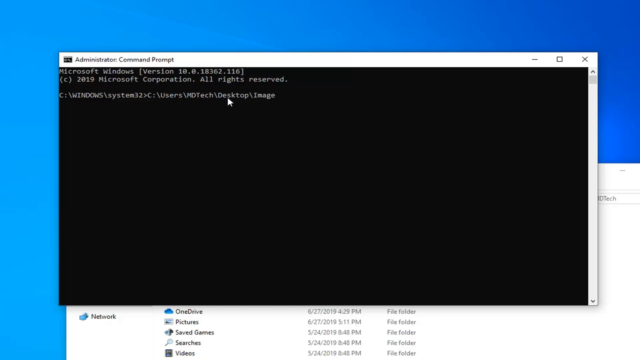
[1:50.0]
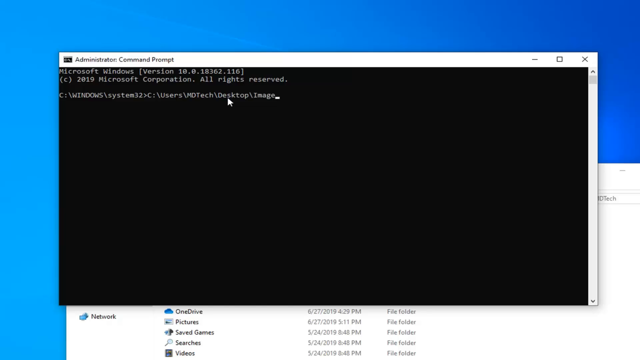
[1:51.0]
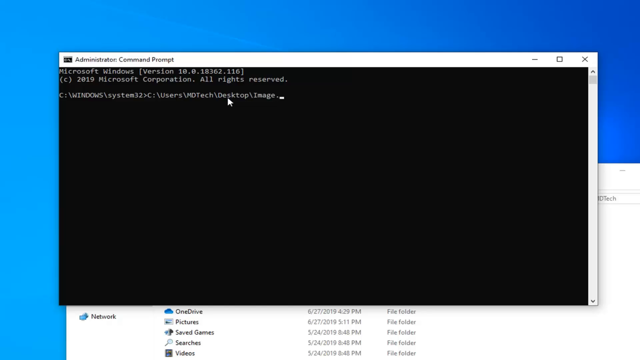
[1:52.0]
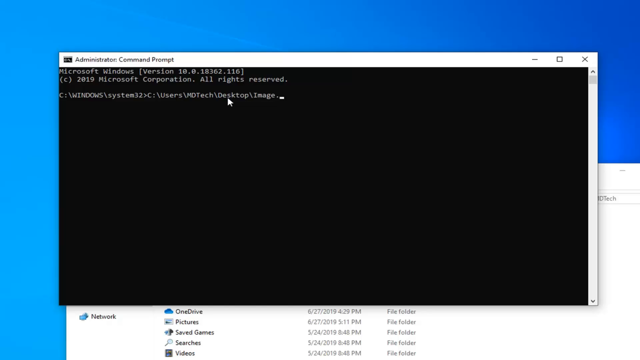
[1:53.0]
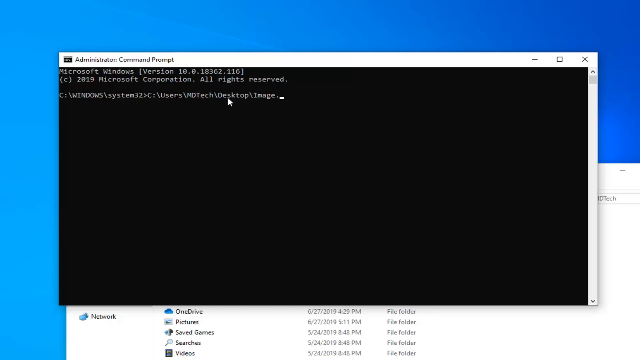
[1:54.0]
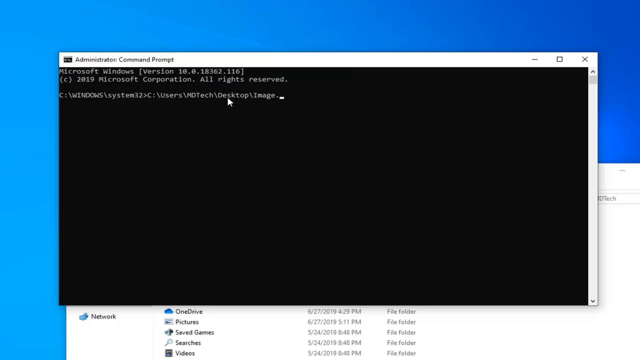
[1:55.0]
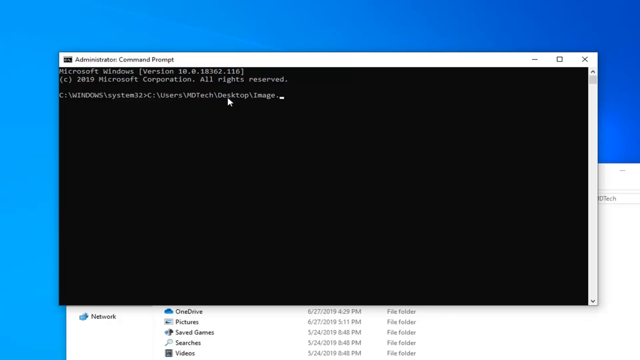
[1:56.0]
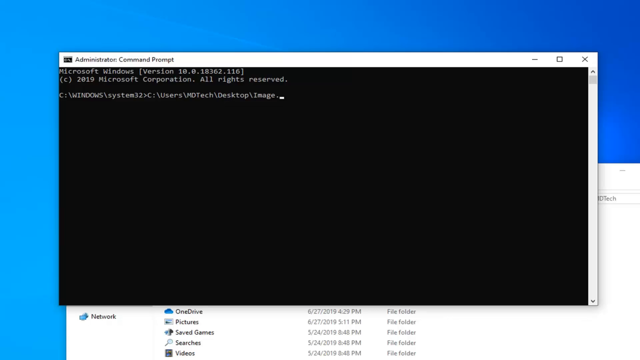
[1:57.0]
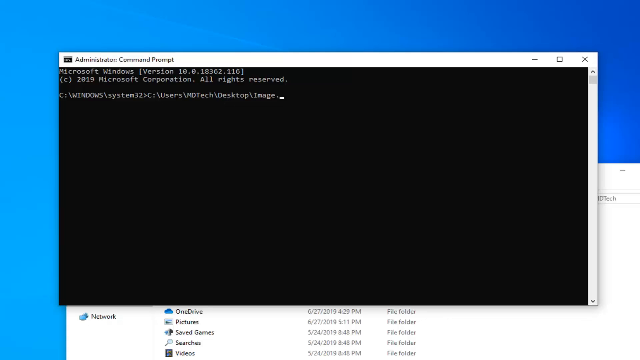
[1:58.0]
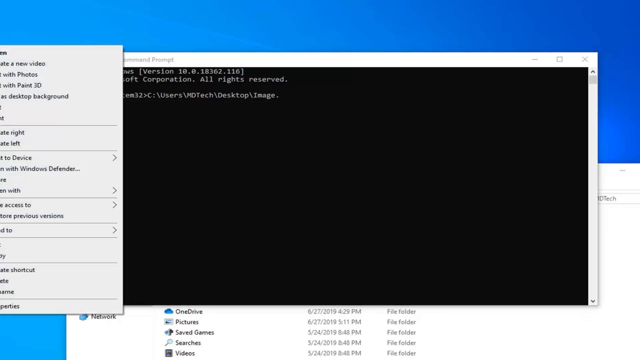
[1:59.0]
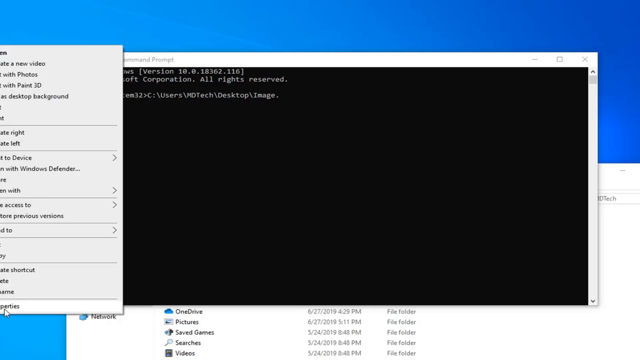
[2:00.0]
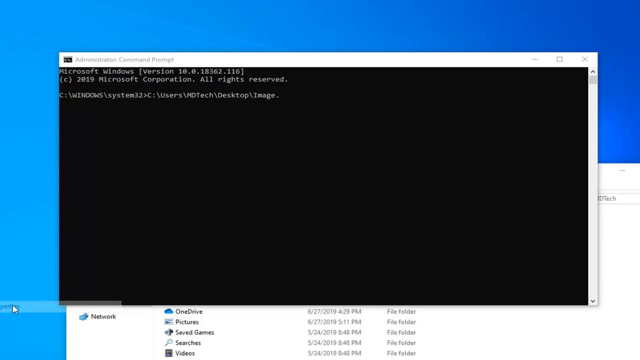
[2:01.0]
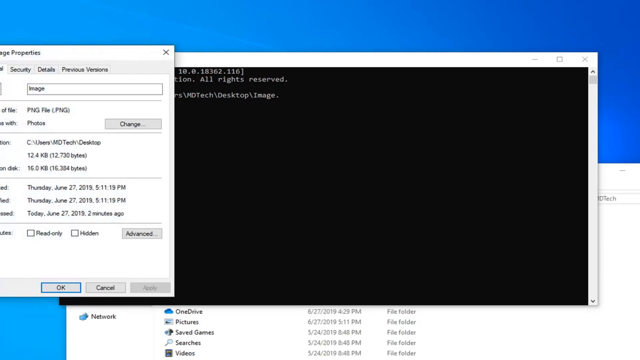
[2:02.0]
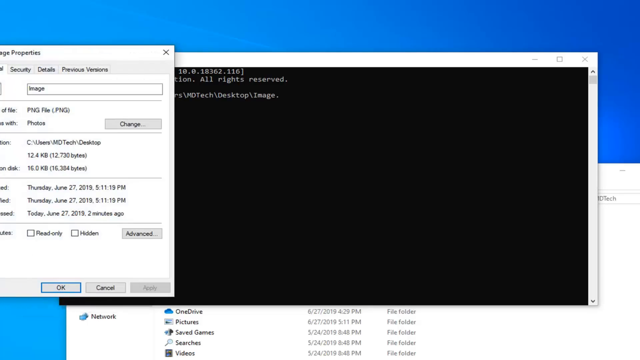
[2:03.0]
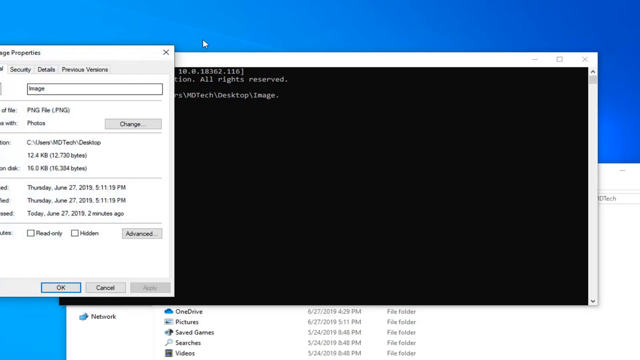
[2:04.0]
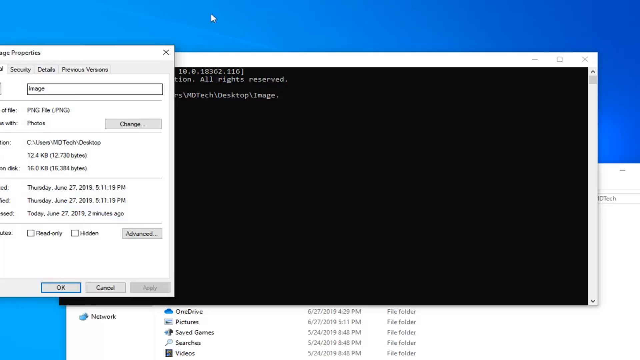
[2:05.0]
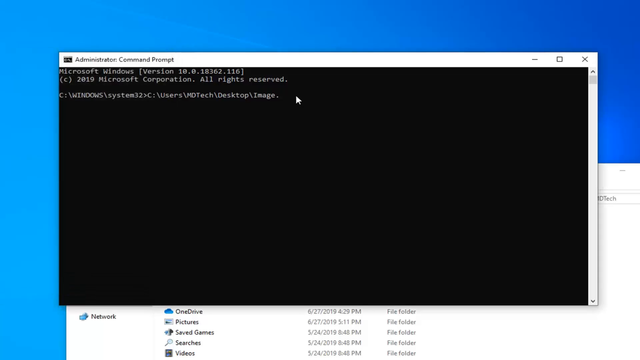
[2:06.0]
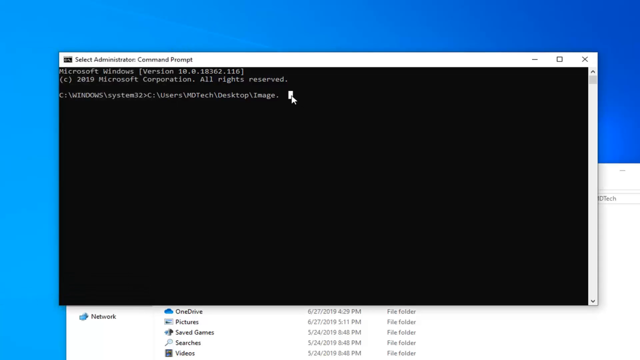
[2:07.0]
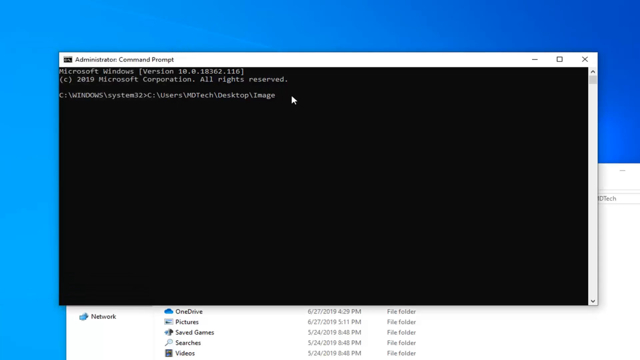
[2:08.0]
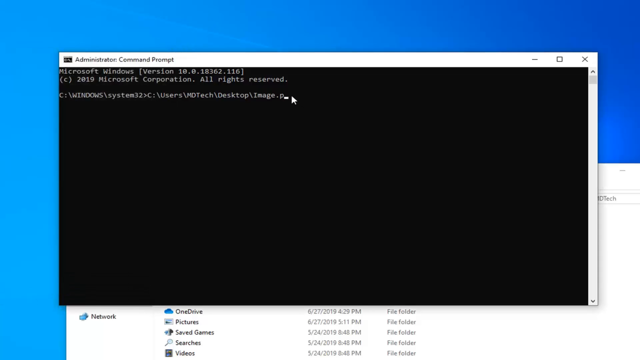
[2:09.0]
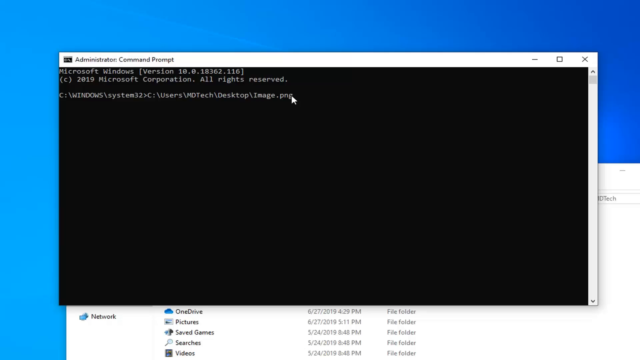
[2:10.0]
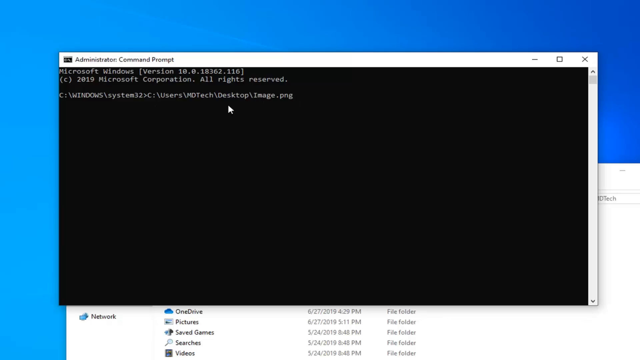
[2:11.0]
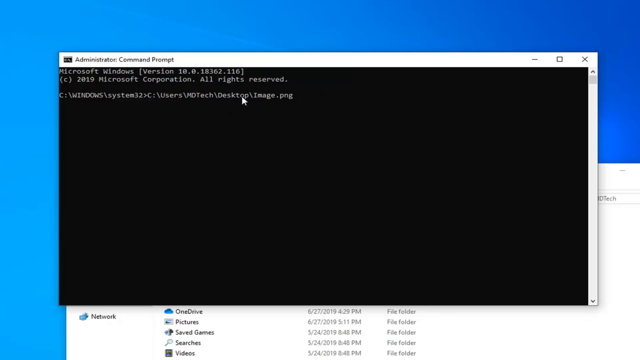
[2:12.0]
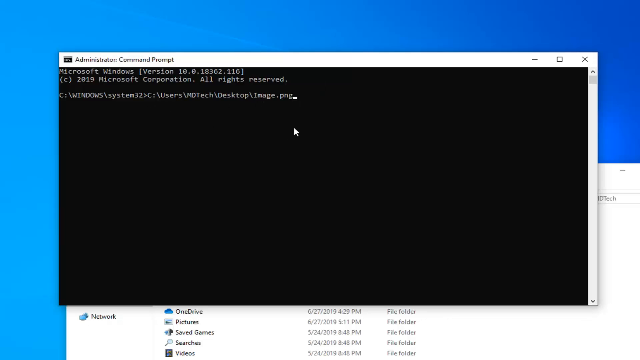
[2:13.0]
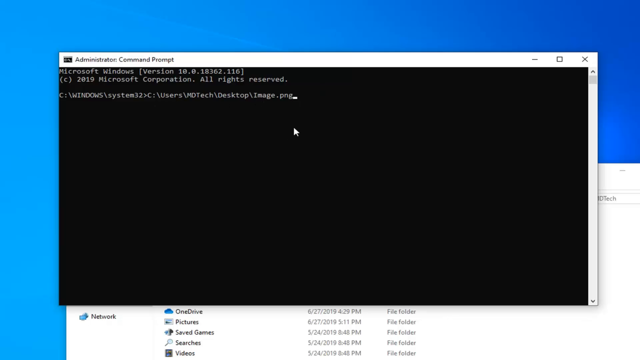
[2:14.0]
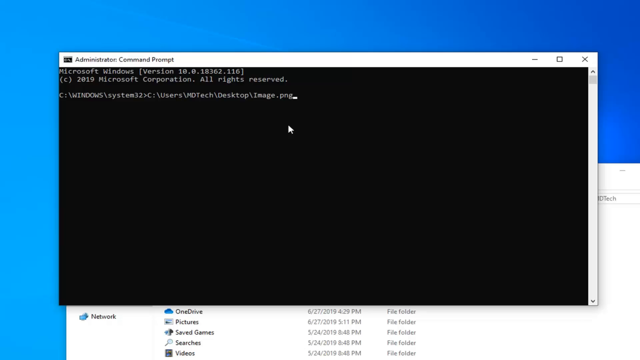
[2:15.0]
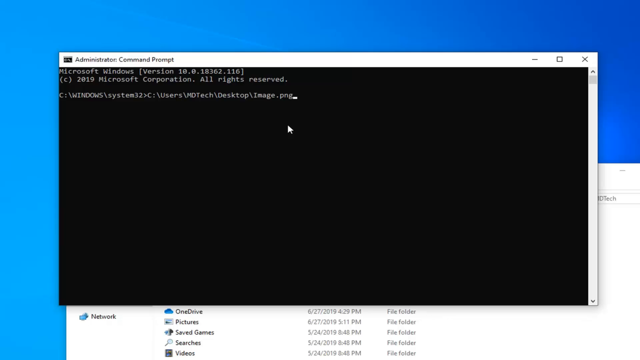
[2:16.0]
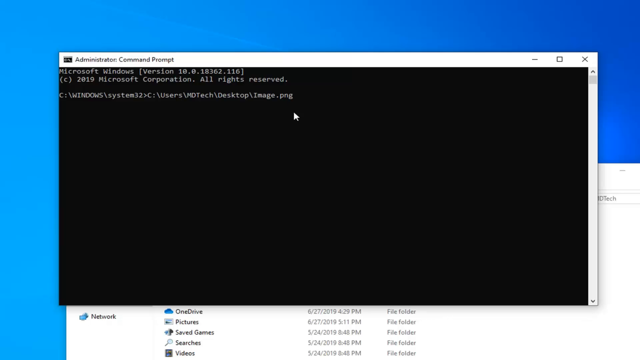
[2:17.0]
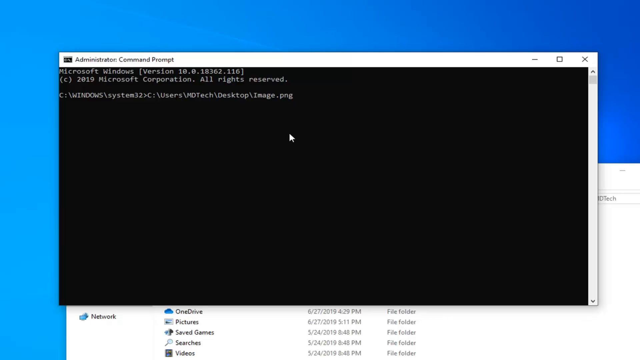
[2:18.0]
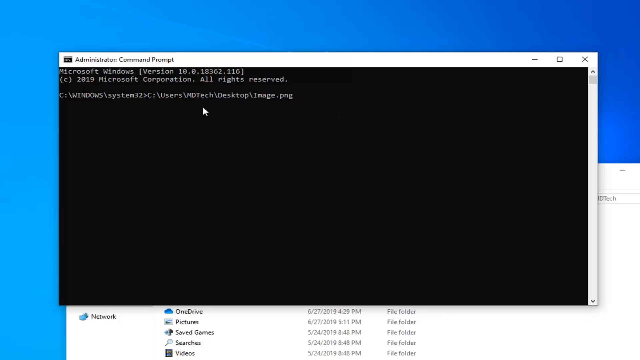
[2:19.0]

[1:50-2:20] The administrative command prompt shows "Microsoft Windows version 10.0" and a line ending "Operation All Rights Reserved". The commands read "C:\Windows\system 32" and "C:\users\MD Tech\desktop\image". The person opens a properties tab, which lists an image, PNG file, and Photos, and then closes it.